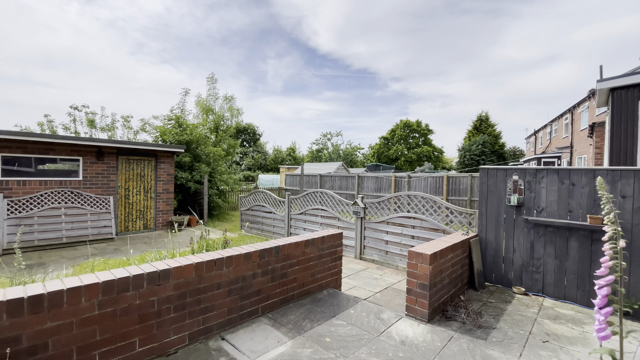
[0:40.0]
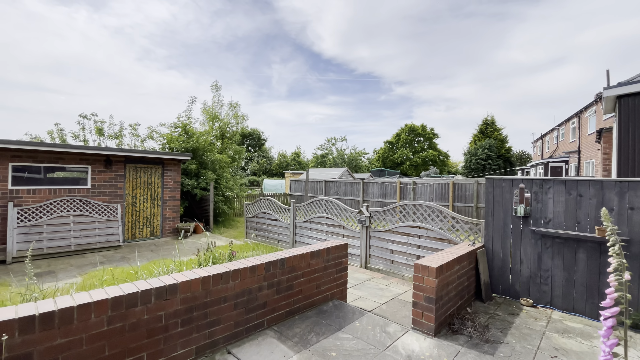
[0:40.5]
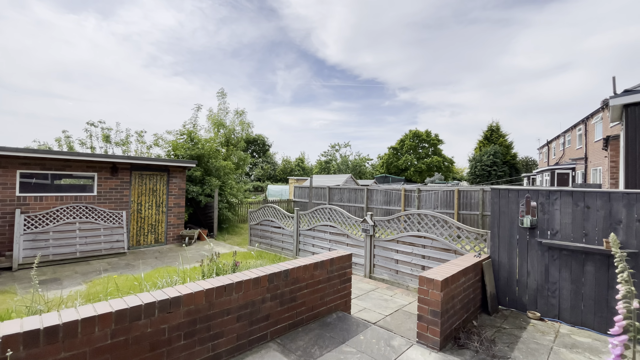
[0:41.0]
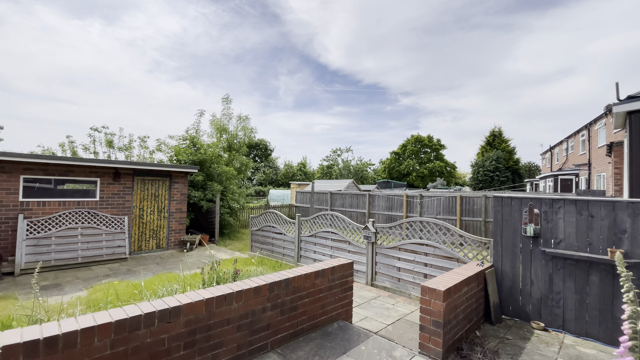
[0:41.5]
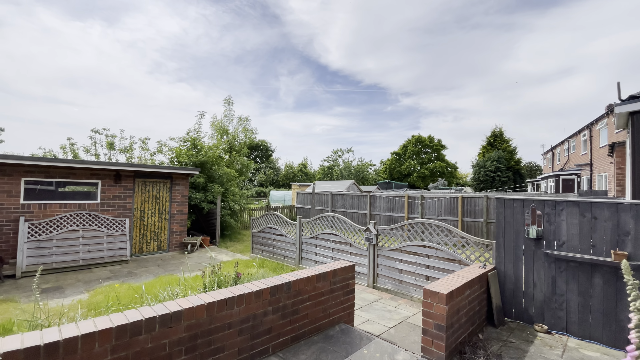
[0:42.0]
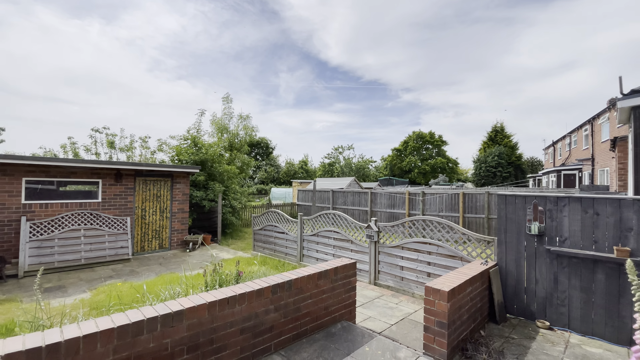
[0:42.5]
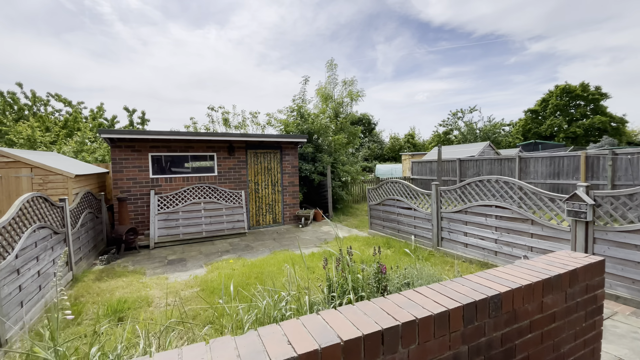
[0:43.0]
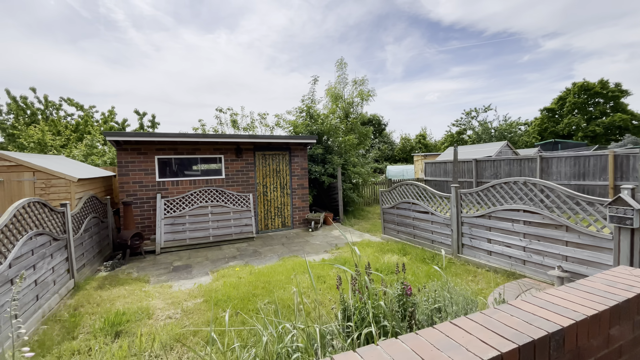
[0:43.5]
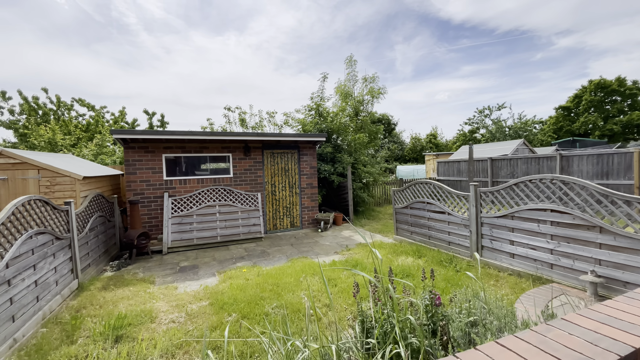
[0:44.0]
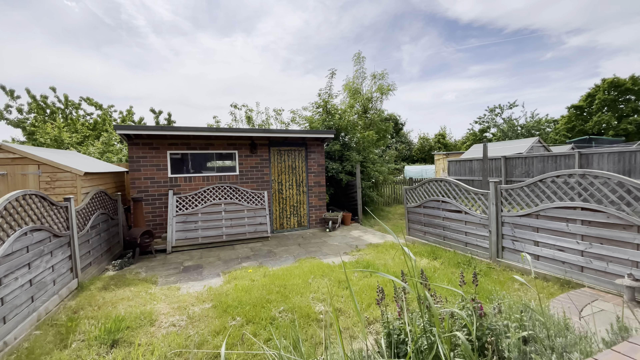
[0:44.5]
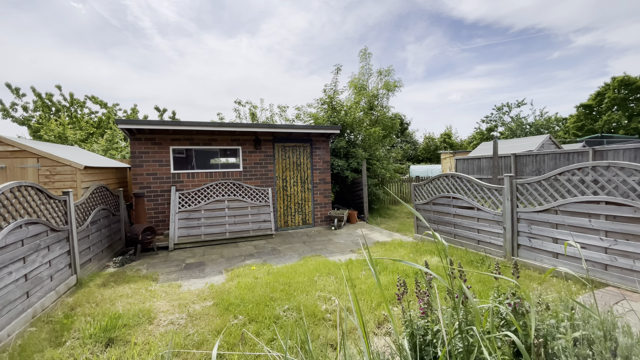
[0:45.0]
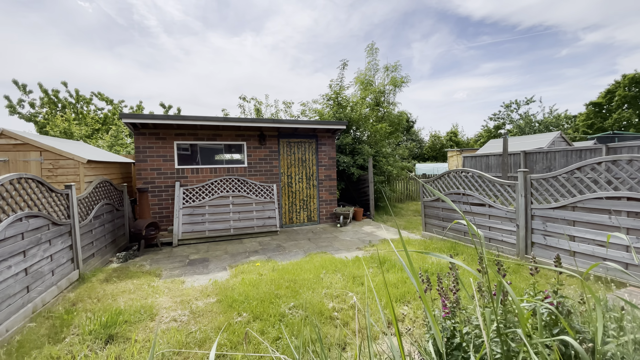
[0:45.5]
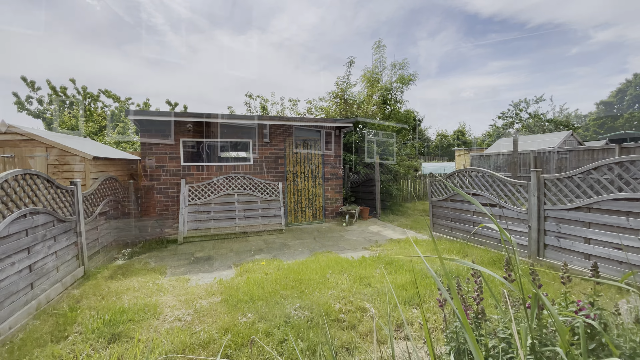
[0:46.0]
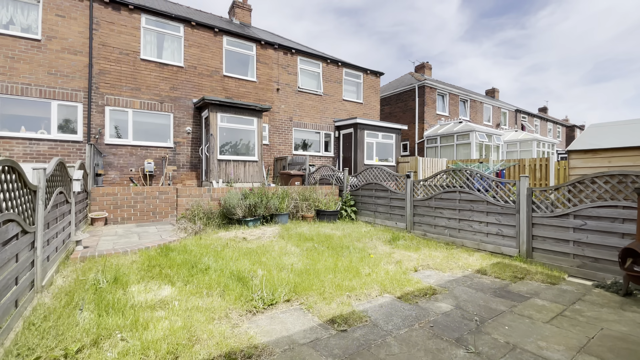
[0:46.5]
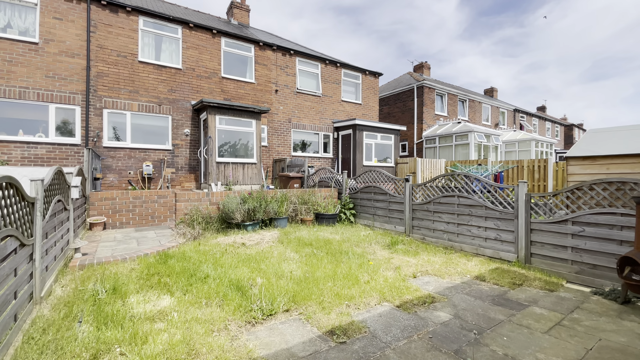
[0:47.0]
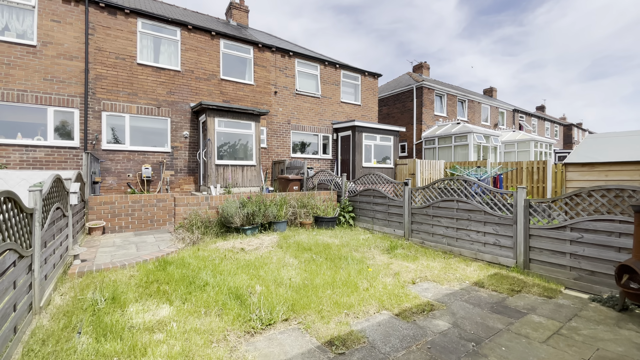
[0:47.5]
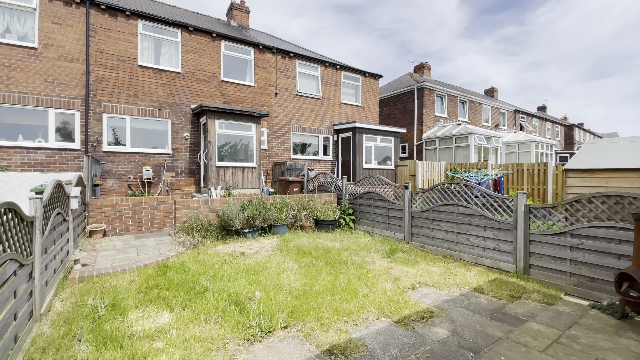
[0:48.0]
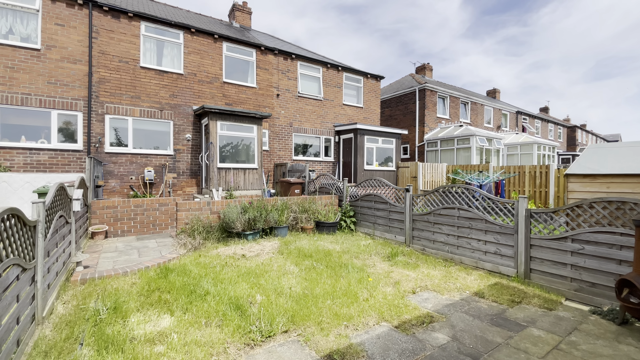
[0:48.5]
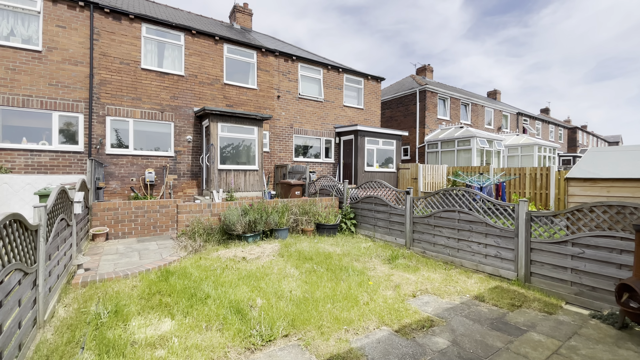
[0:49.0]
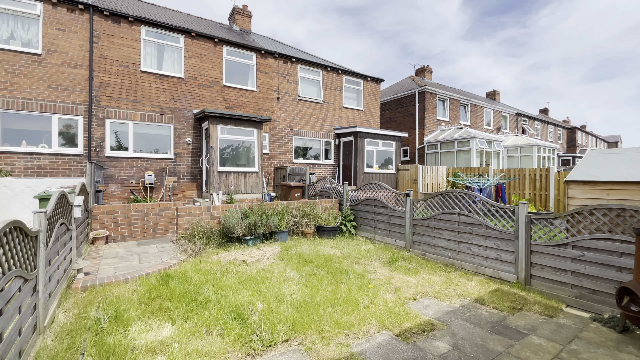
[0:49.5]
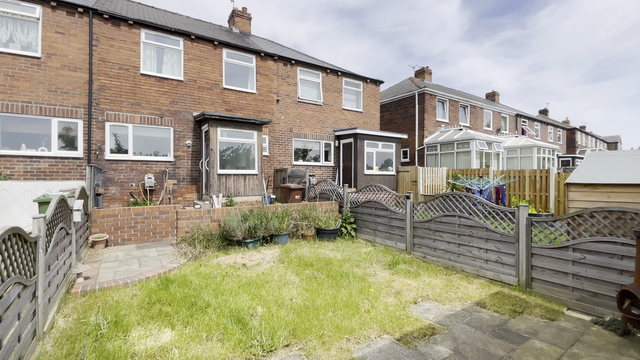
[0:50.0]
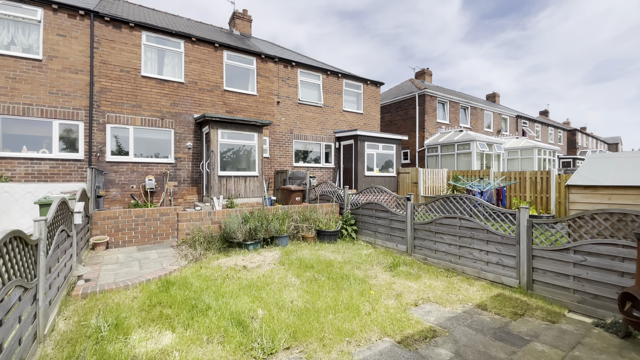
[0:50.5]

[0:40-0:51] The camera documents the outside yard of an apartment in an apartment complex, focusing on a backyard space with a gray tiled cement patio and a brick wall divider with different styles of fencing that separate the apartments. The camera pans up to show a somewhat cloudy, somewhat clear sky, with trees and foliage in the background, another building to the left, and the rest of the apartment complex stretching into the distance on the right-hand side. The camera then pans around above the grassy area of the backyard and morphs to show it from a different angle. The grass is light green, unkempt and somewhat long. Several overgrown potted plants stand along the back of the brick wall divider. The fence to the right has a scalloped, curved edge with lattice on top. The back of the apartment complex is shown with several glass windows; the buildings have slanted black roofs and brick chimneys. There is a clothesline in the backyard of the neighbor's apartment.